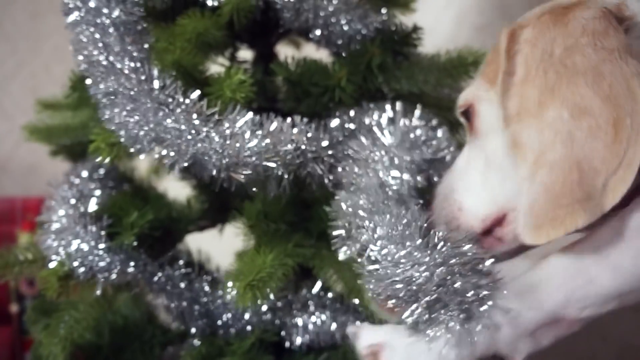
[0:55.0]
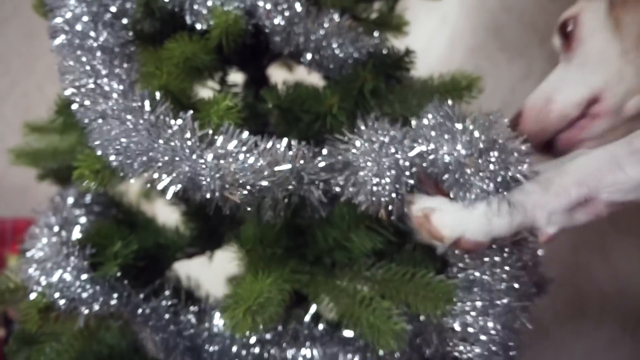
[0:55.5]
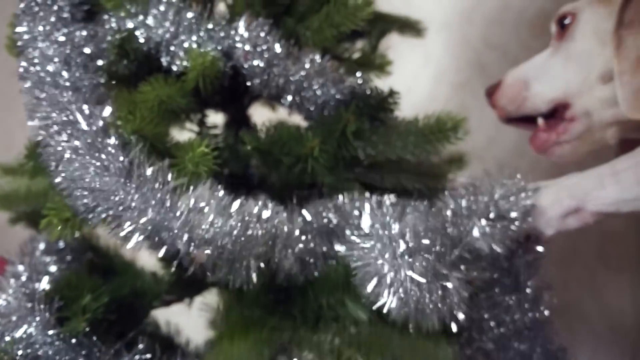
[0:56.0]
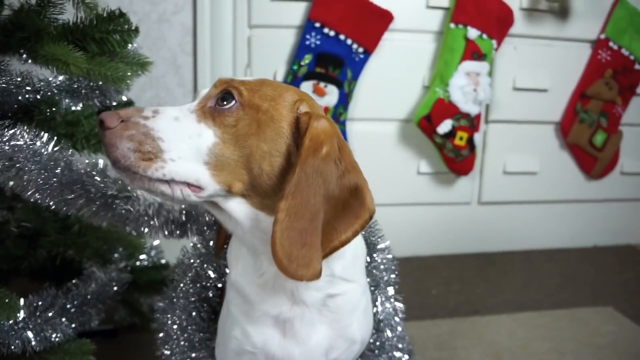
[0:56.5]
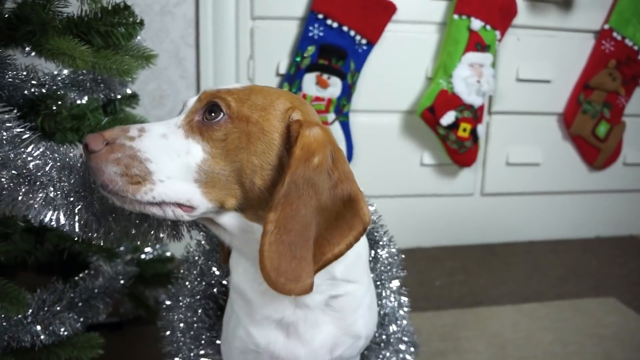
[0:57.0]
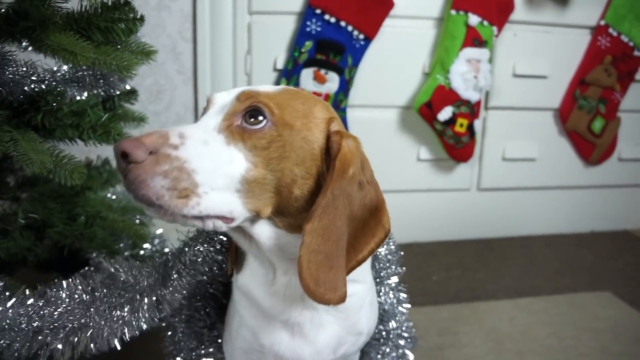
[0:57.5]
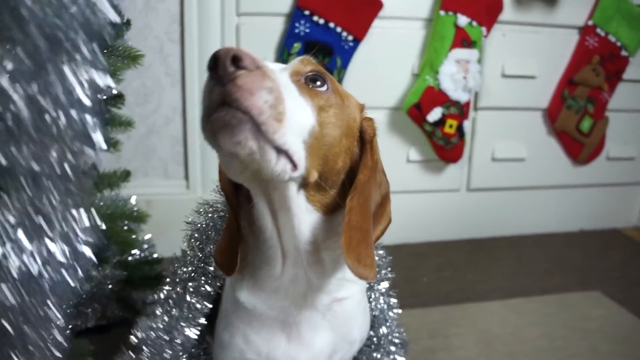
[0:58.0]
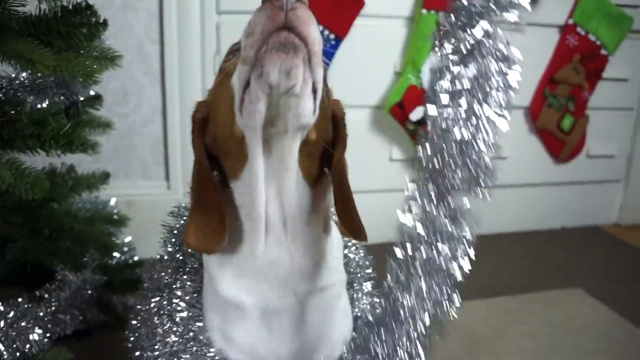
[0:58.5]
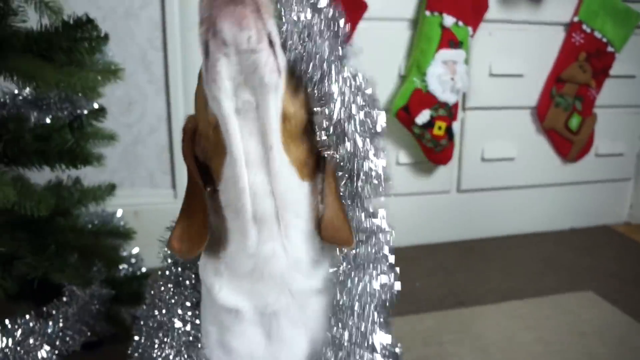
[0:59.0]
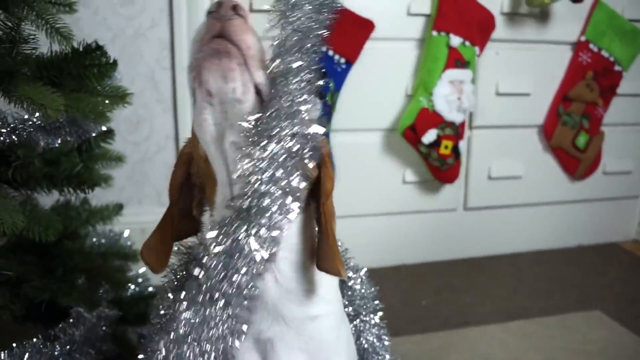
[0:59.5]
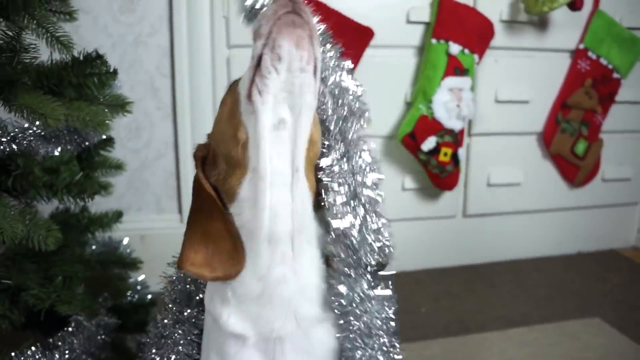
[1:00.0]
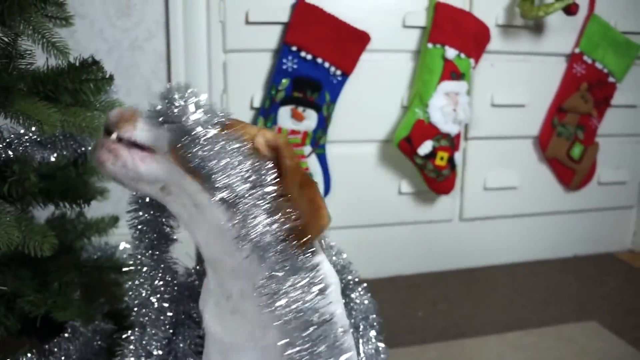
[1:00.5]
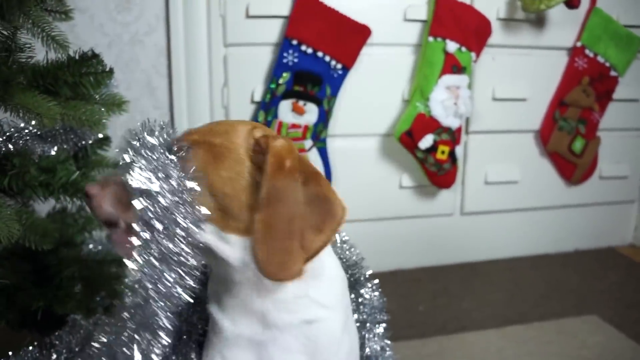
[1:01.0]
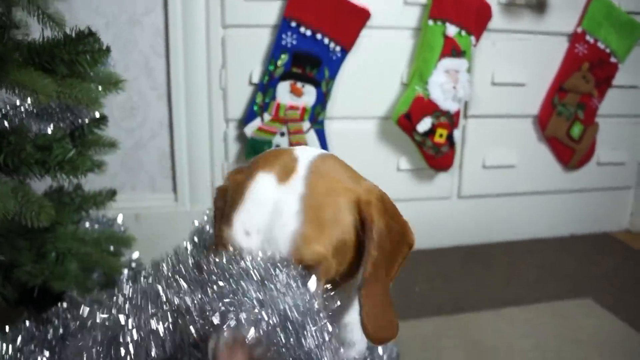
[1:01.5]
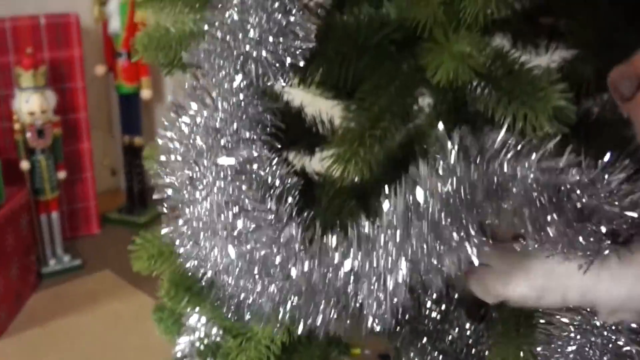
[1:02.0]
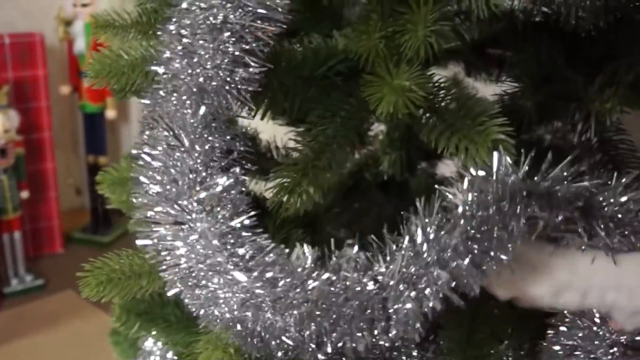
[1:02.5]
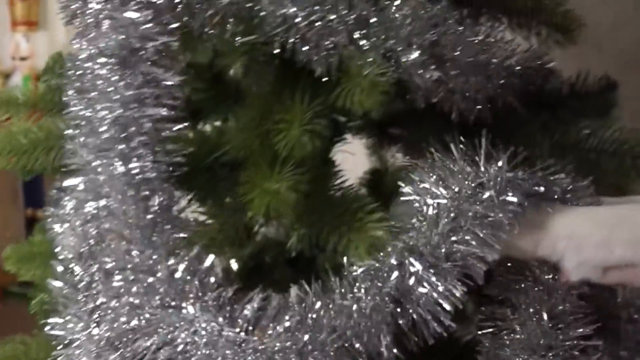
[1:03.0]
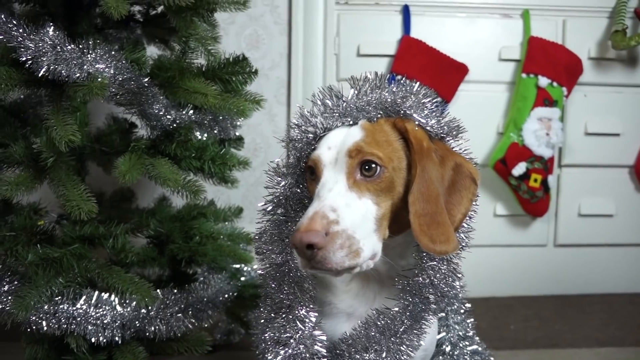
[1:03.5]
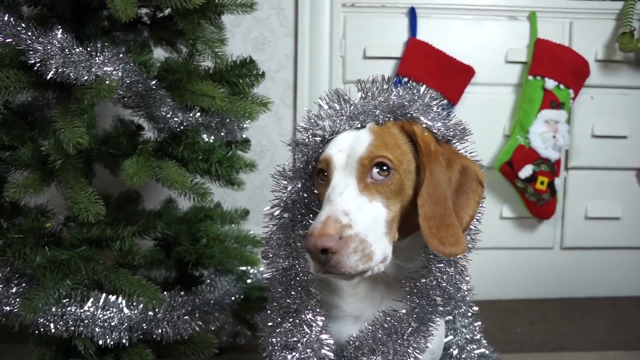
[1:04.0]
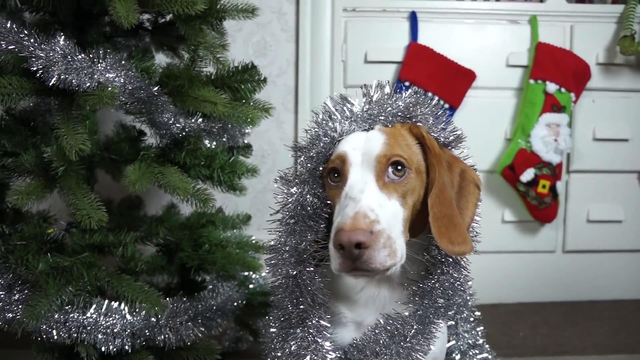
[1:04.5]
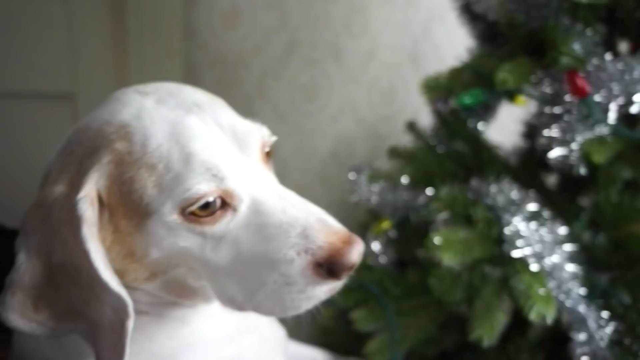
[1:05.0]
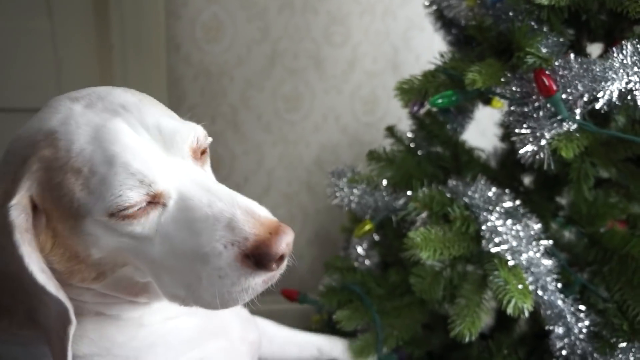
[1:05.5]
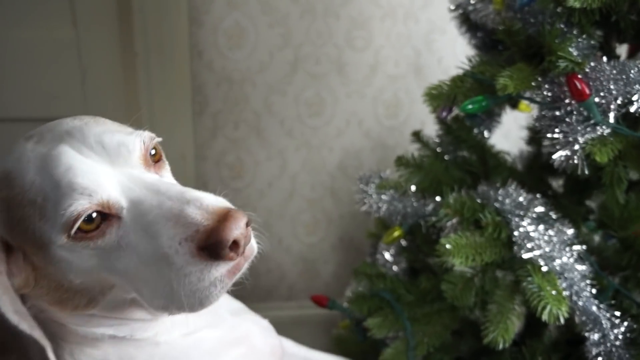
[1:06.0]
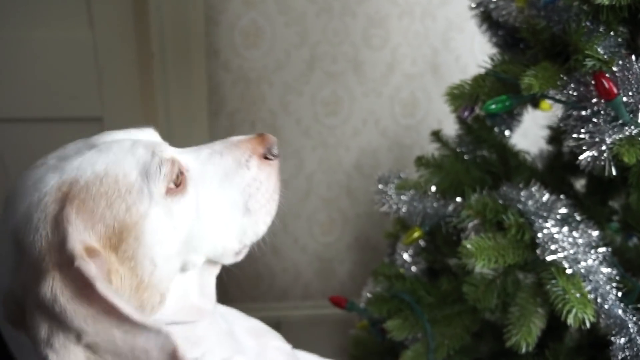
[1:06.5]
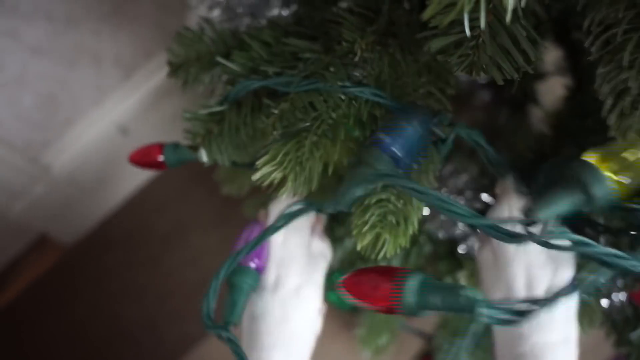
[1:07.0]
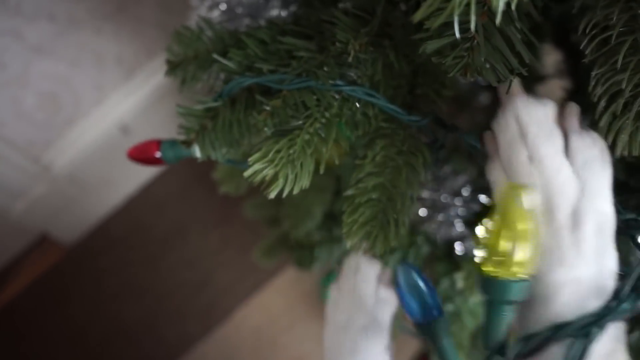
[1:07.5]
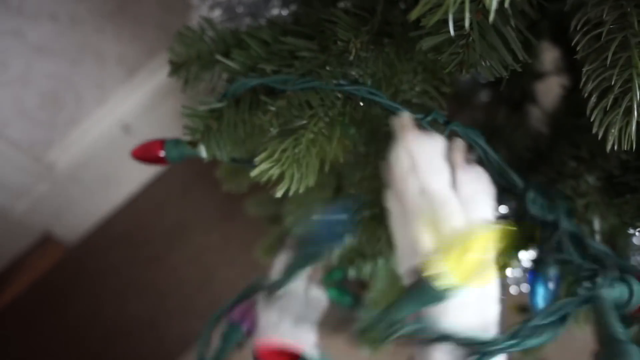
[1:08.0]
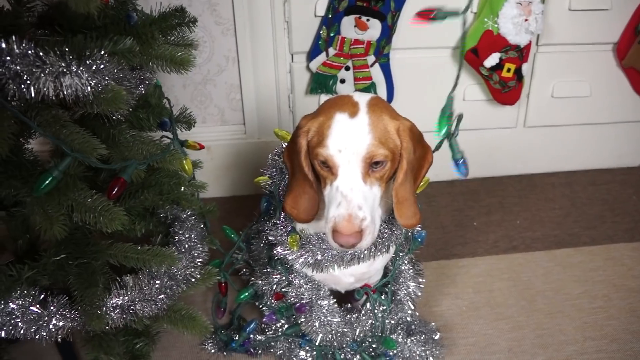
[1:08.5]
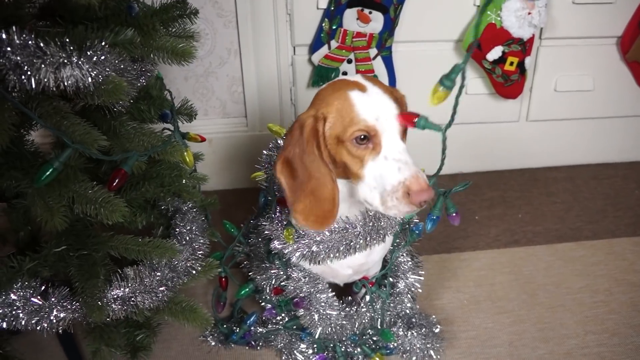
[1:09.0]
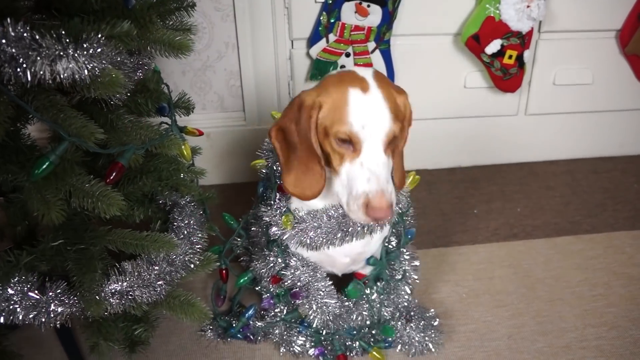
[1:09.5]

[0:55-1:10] The white dog decorates the Christmas tree with silver tinsel and colorful Christmas lights, and it also wraps the other dog in the same silver tinsel and lights. The tree has silver tinsel going around it. By the end, the dog with the brown mask is wrapped up in silver tinsel and colorful lights.